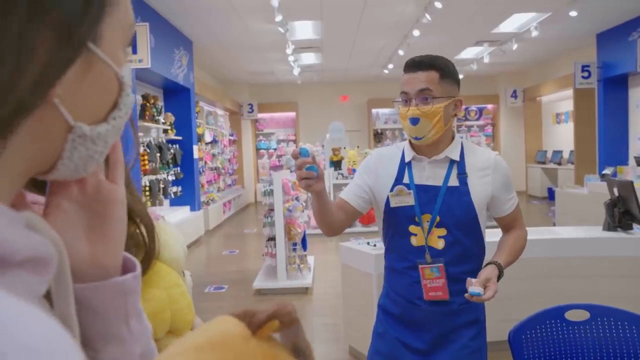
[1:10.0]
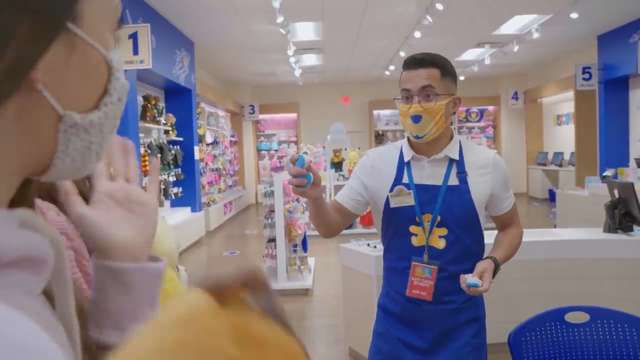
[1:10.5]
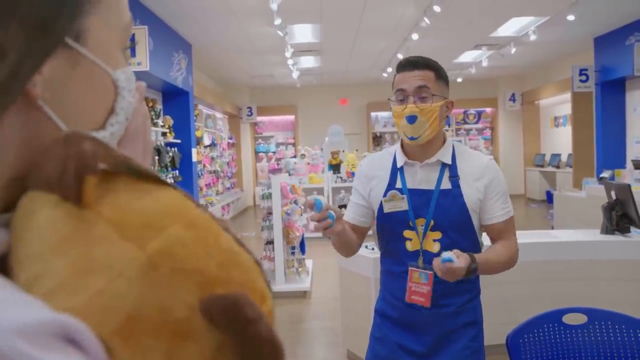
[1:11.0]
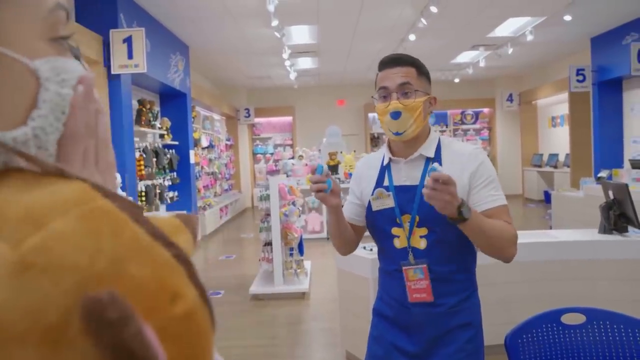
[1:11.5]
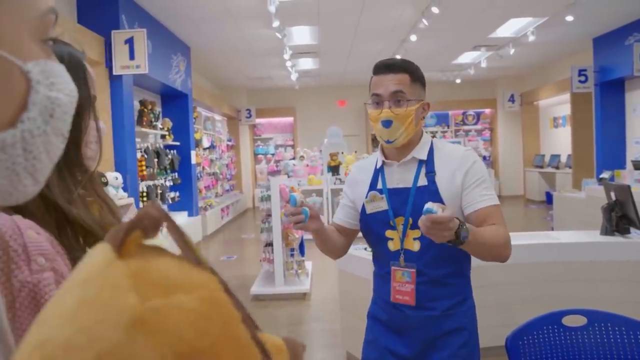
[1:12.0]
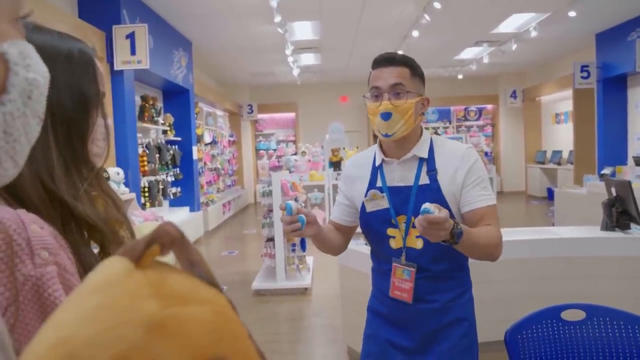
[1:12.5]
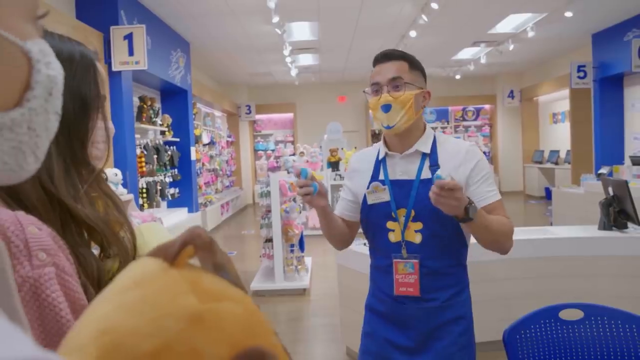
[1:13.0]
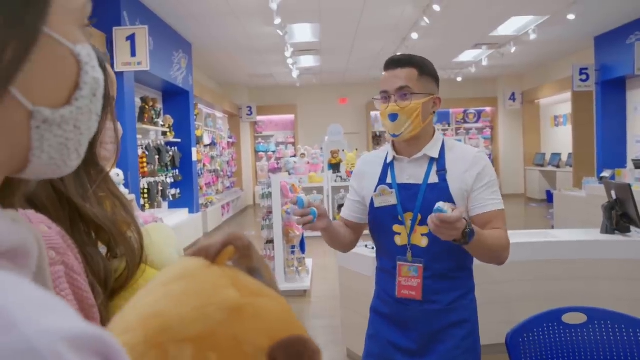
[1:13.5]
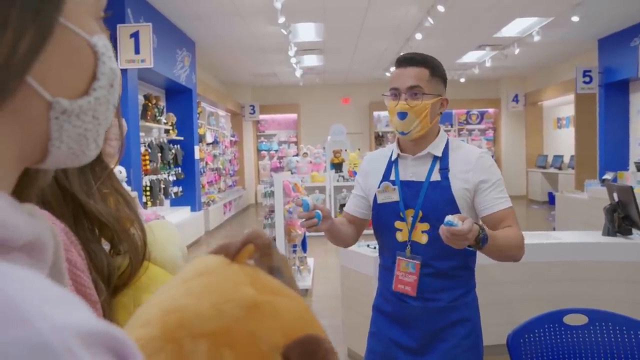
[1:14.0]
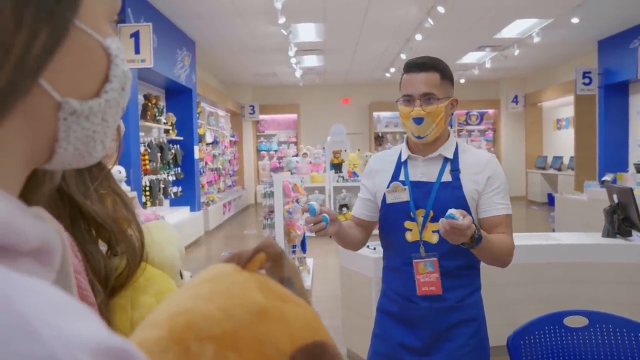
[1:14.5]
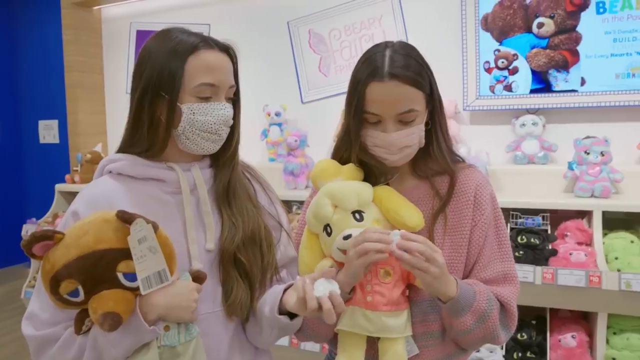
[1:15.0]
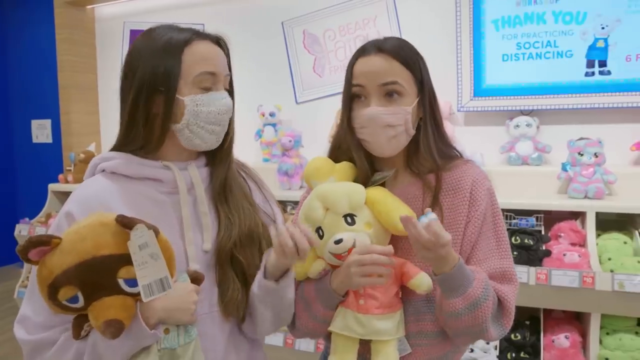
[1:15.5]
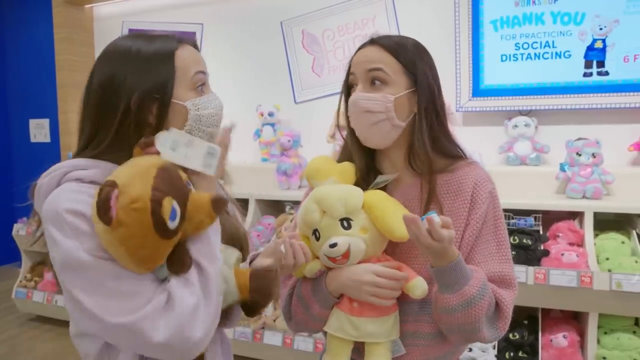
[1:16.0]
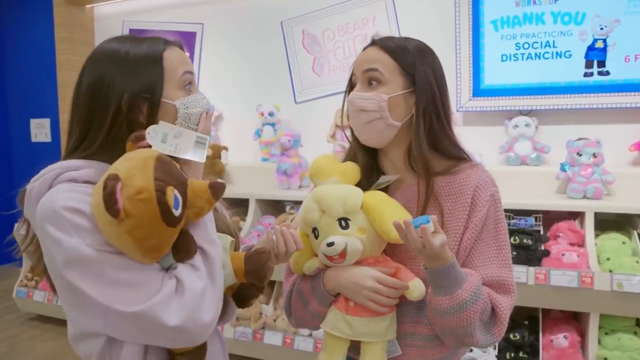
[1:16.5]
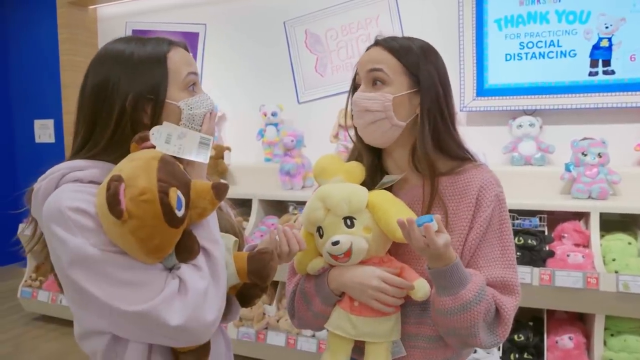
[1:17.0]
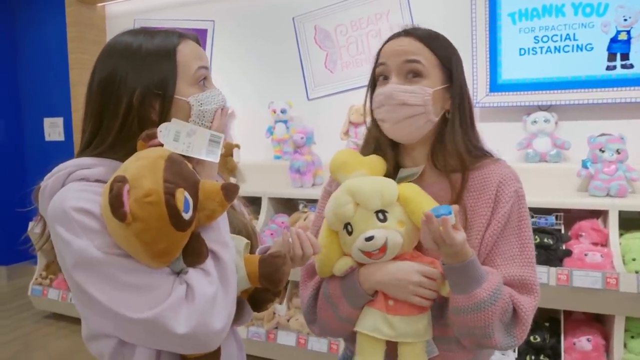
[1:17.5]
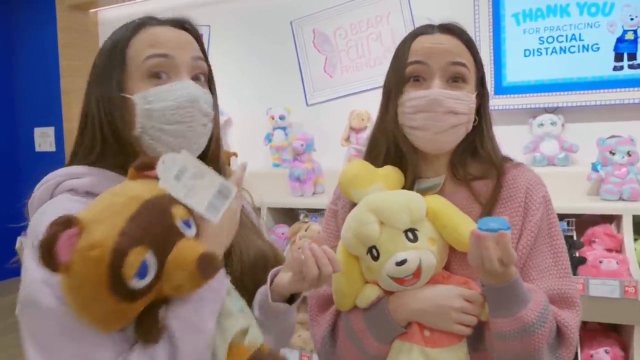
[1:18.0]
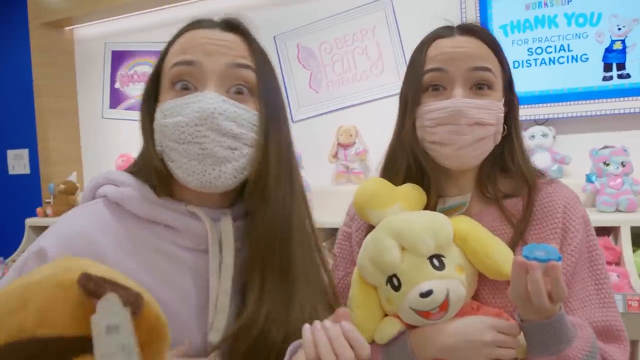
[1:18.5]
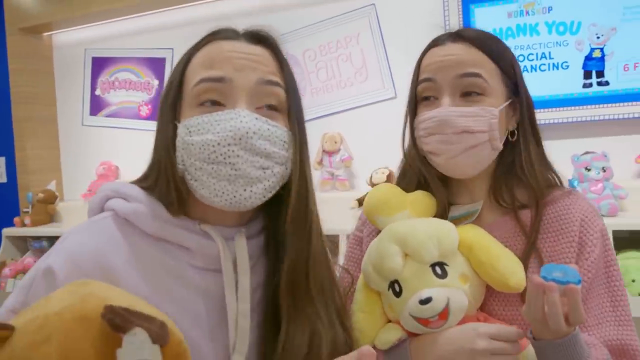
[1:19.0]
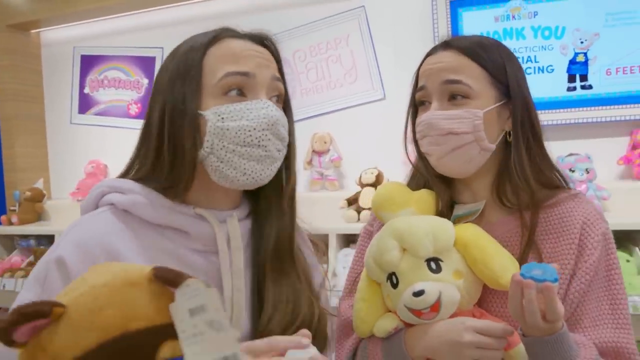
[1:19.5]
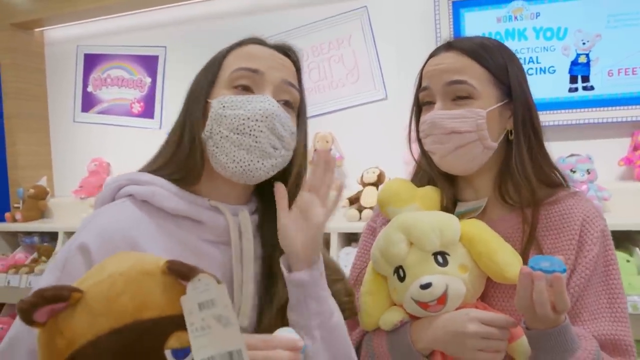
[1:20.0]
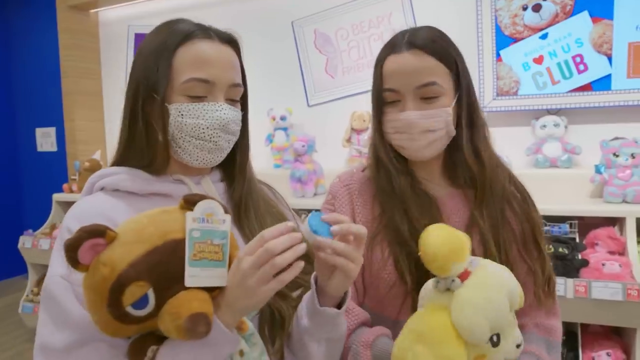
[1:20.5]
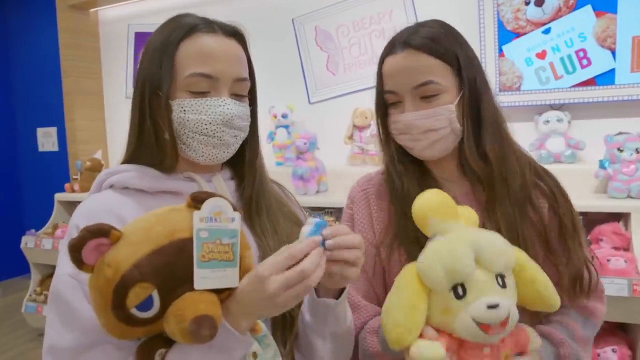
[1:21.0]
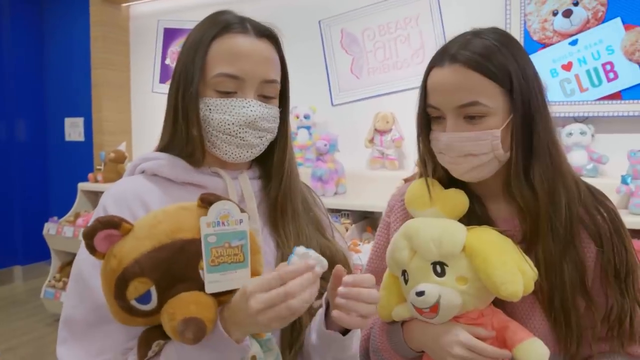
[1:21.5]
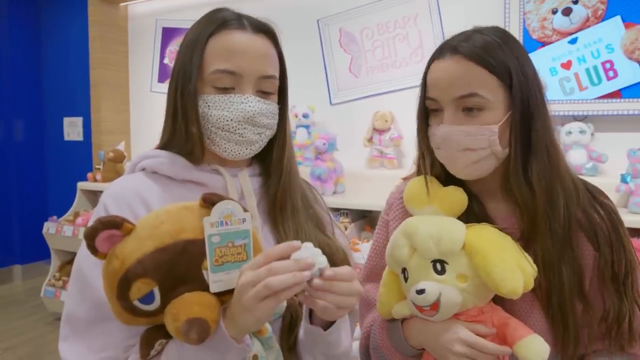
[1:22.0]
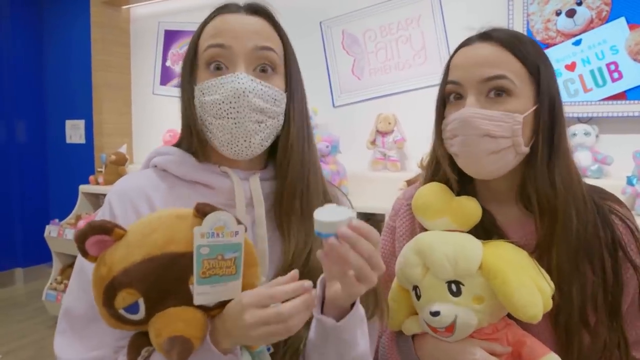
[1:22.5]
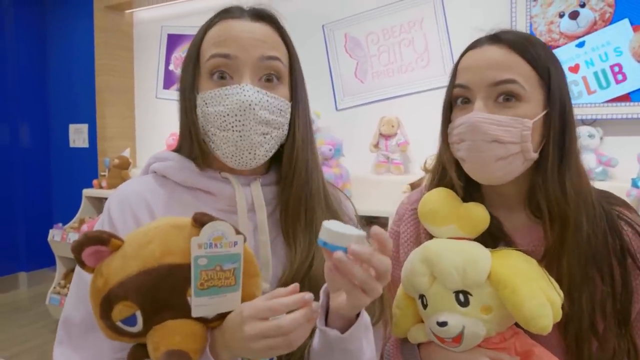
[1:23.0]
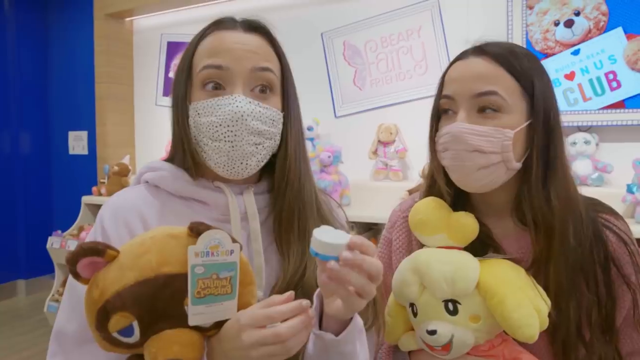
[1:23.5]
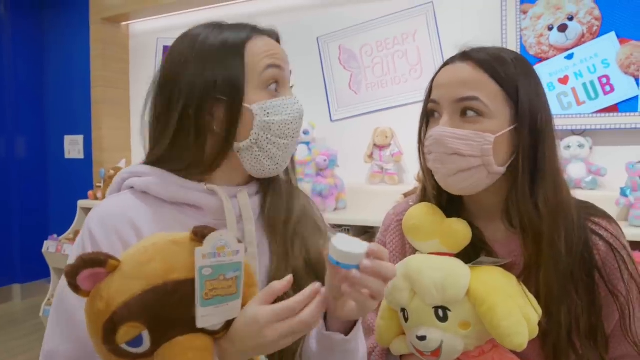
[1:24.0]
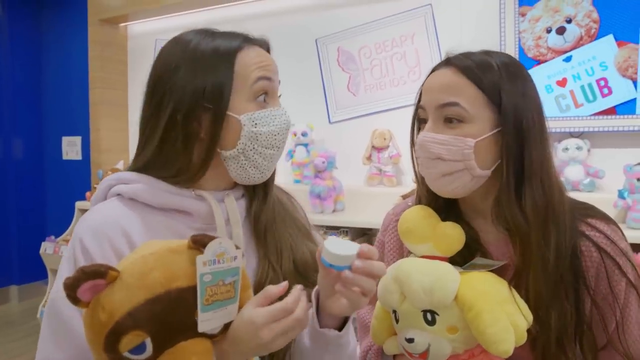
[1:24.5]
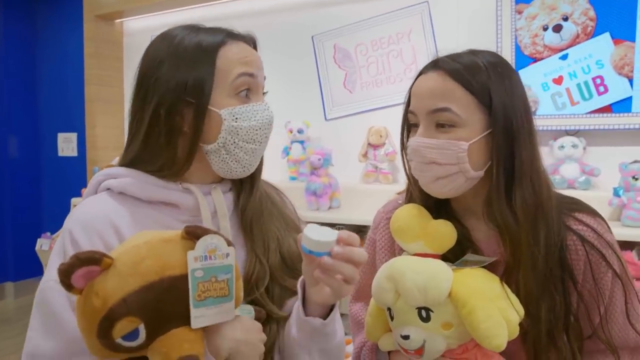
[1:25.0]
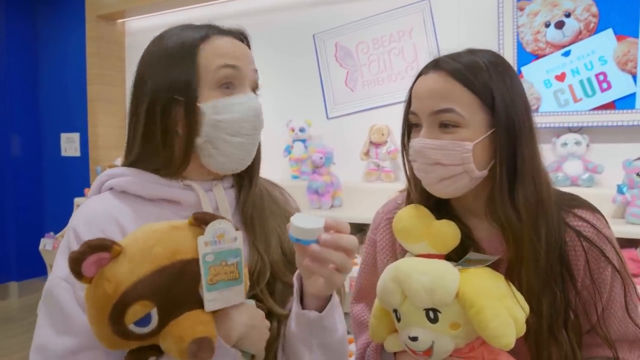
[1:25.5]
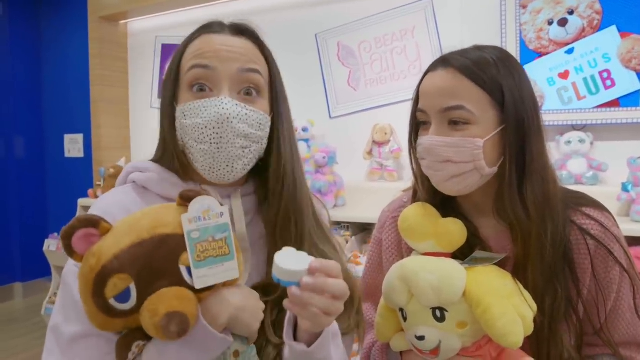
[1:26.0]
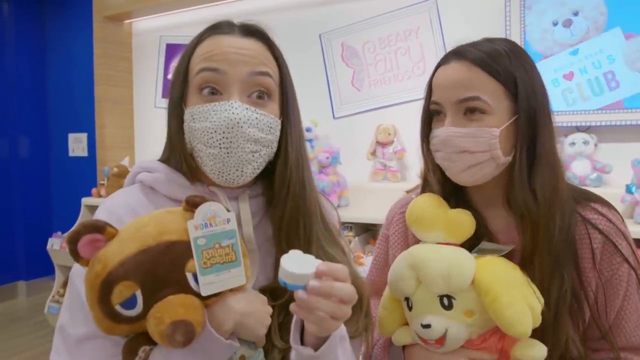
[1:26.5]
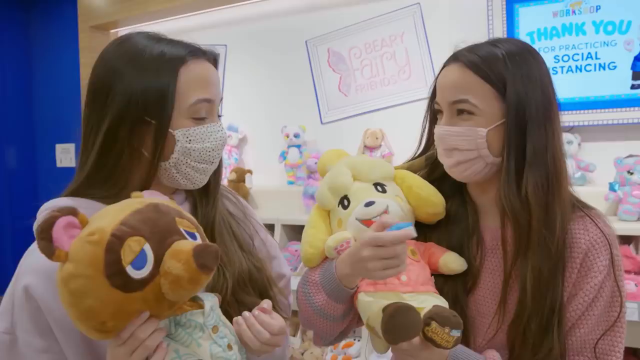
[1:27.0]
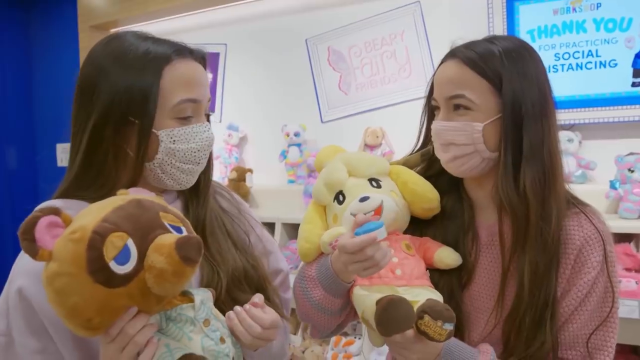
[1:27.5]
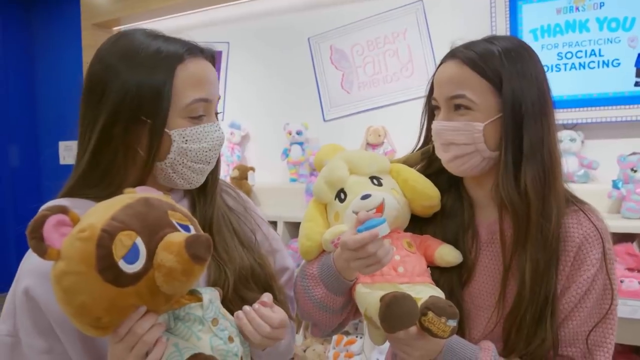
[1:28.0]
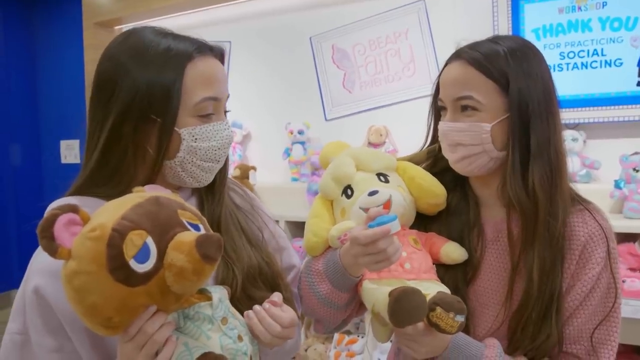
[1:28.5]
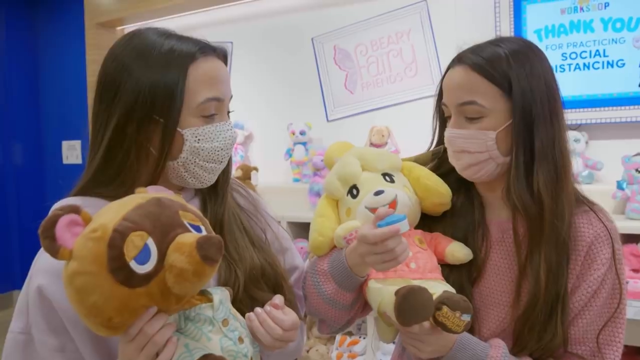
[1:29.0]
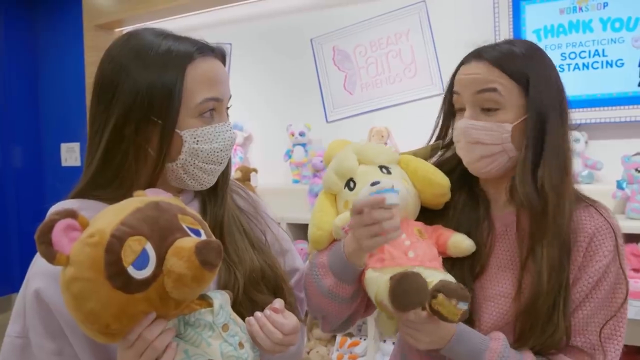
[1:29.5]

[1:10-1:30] The women hold the gadgets, looking excited and curious about what they are. Behind the man there is a blue shelf with three computers lying there, and beside him is a blue seat. The women talk excitedly about the two gadgets. Behind them, a display on the wall says "thank you", and another display says "bonus club" with a teddy bear. The display keeps changing.